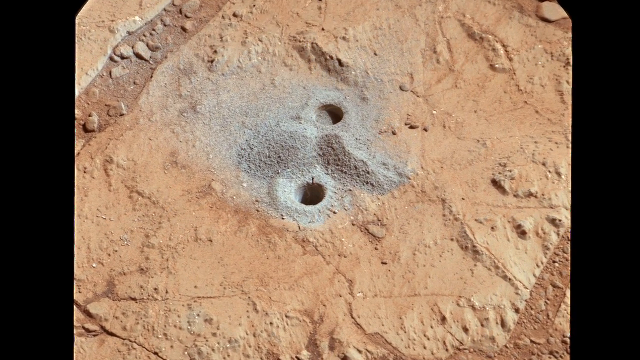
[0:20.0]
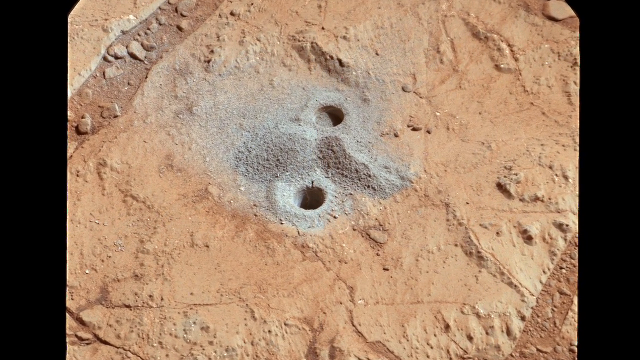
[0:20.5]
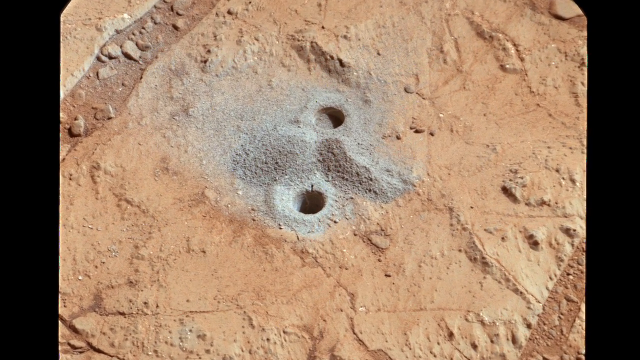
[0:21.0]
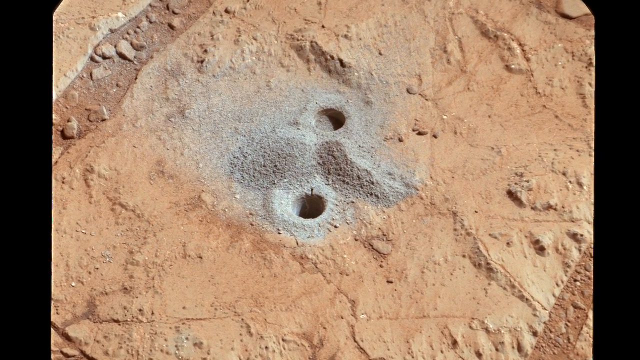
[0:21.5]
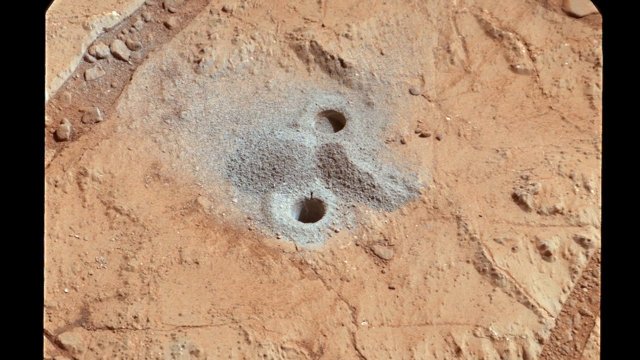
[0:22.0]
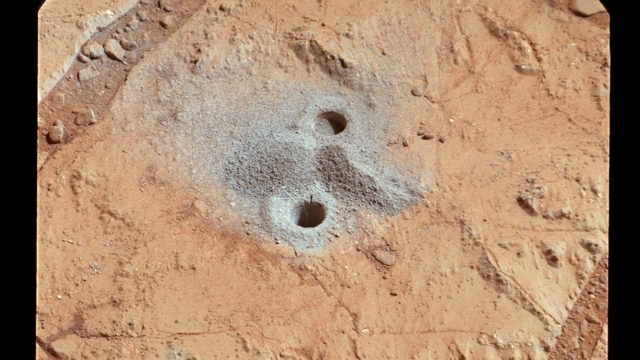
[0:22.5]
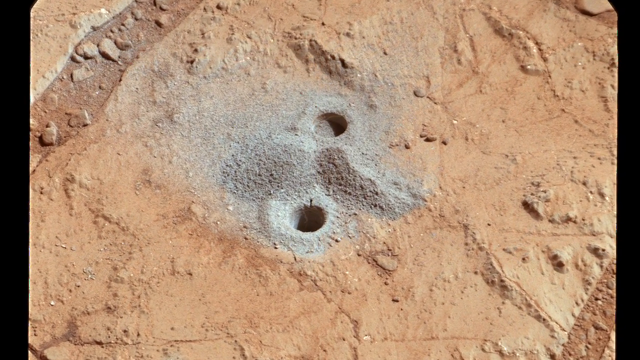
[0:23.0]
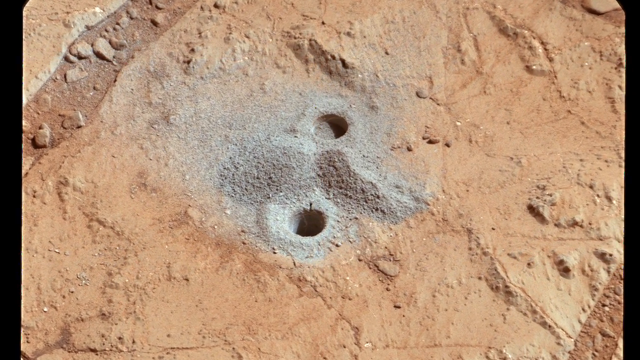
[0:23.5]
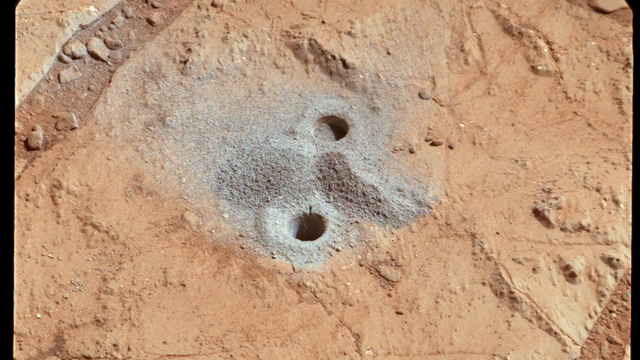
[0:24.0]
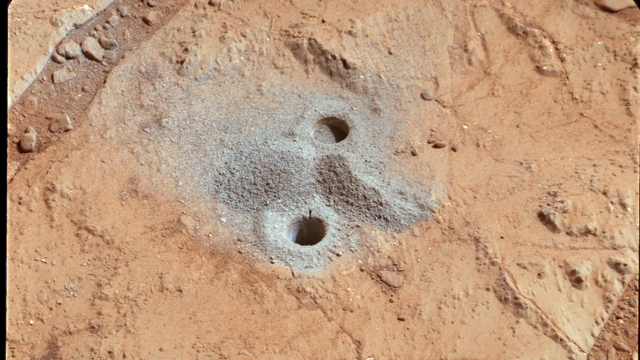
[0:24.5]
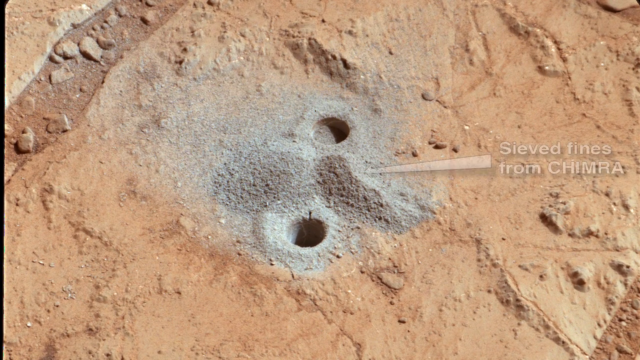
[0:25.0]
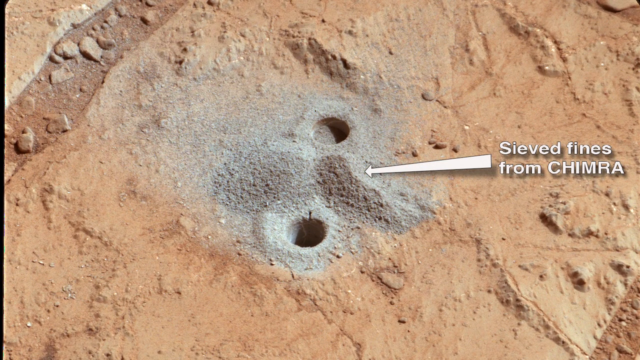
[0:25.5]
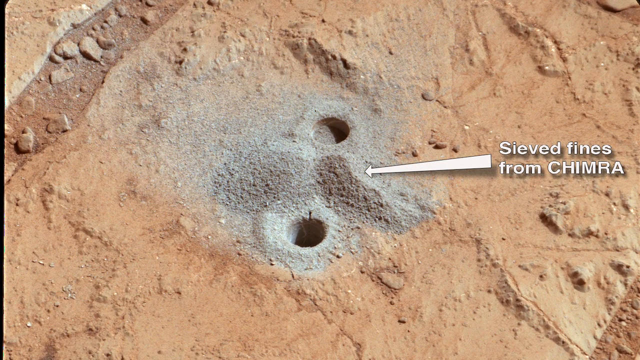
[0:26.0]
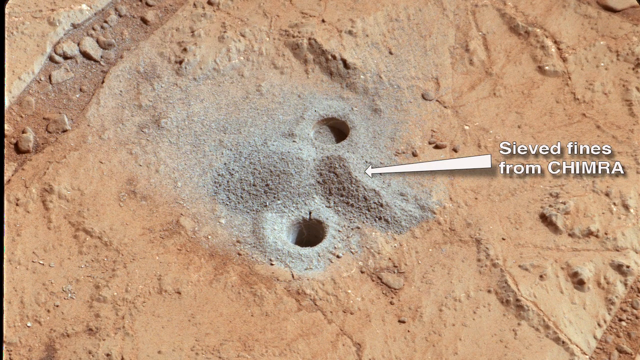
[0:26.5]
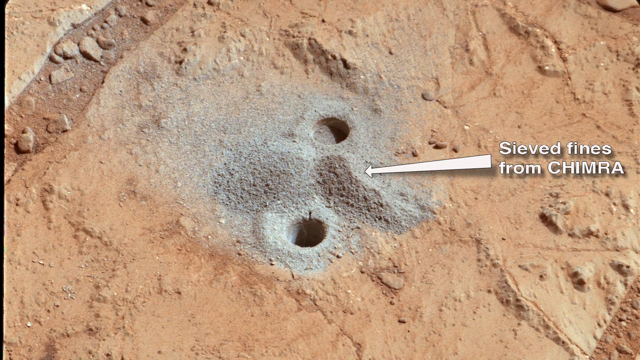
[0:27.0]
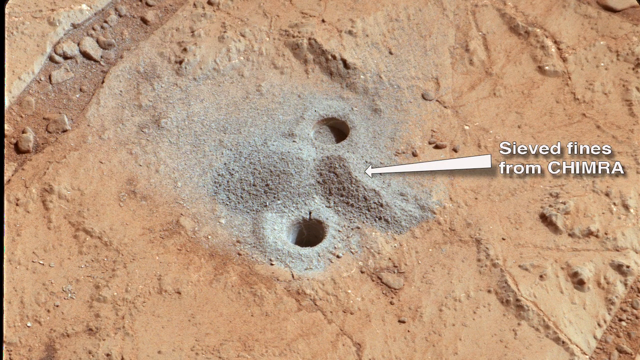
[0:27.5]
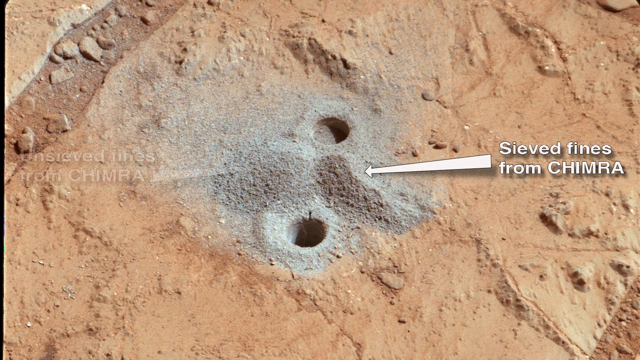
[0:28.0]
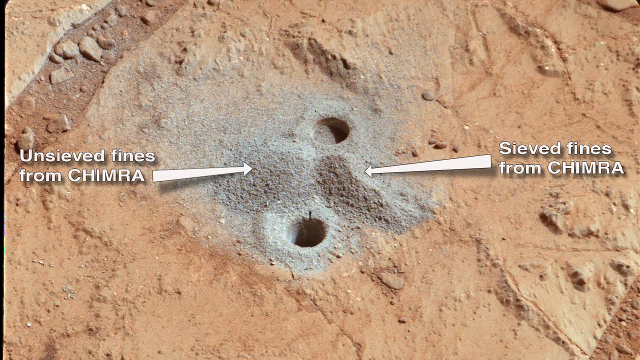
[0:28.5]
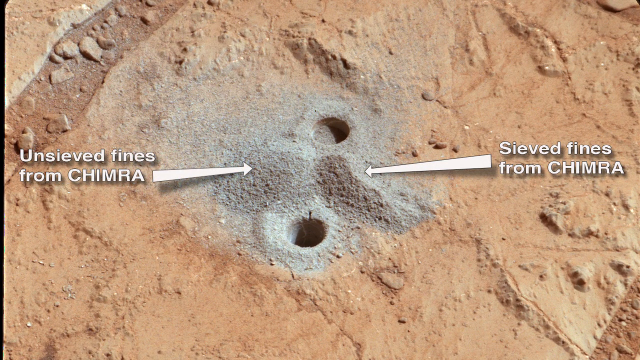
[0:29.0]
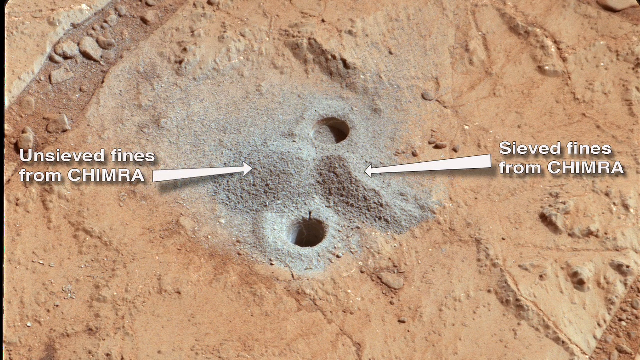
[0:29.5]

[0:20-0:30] What look like holes in the ground on Mars are shown, with the reddish color of the earth on Mars. Grains of what looks like either dust or sand are next to the holes, and the camera zooms in on the two holes. Text appears reading "Sieved finds from CHIMRA", with an arrow pointing from the text to the sand next to the holes. Then more text appears, reading "Unsieved finds from CHIMRA", with an arrow pointing from it to the other pile of dirt or sand on the ground next to the holes. The text is white.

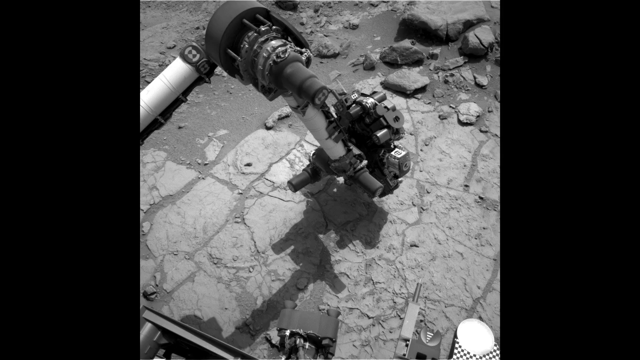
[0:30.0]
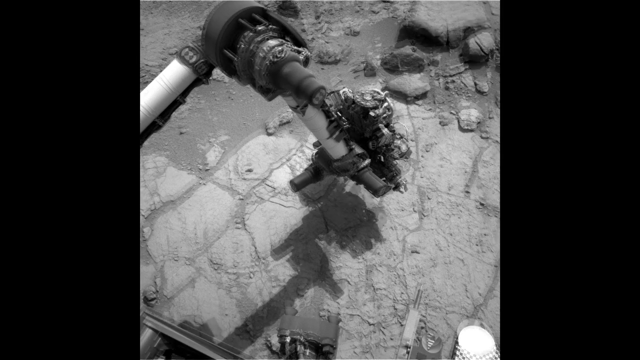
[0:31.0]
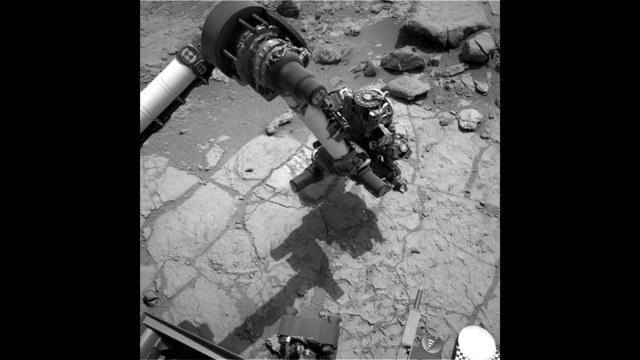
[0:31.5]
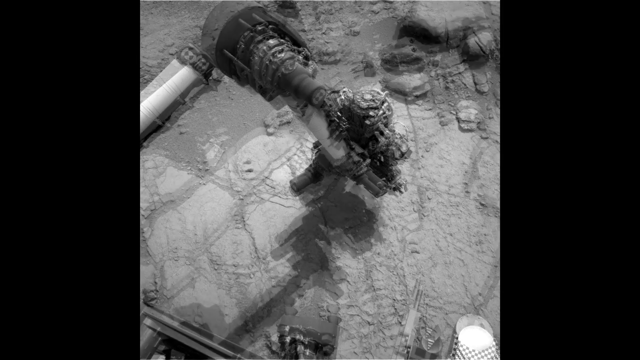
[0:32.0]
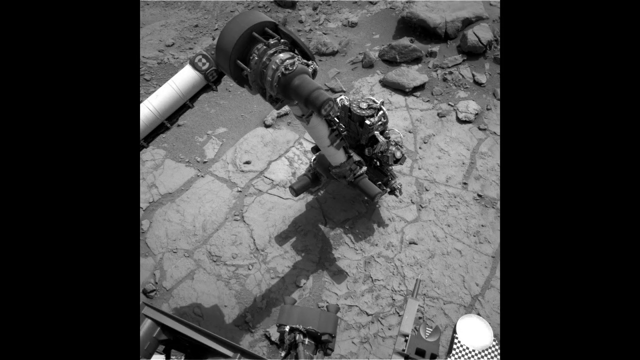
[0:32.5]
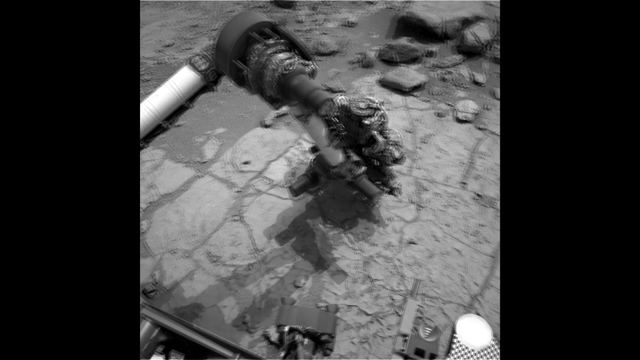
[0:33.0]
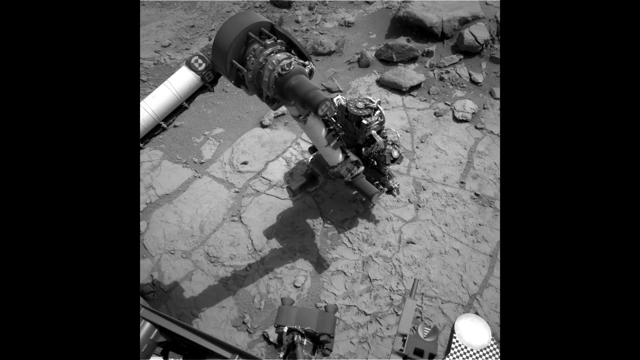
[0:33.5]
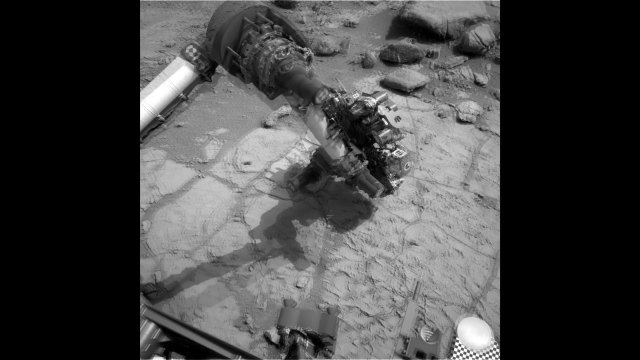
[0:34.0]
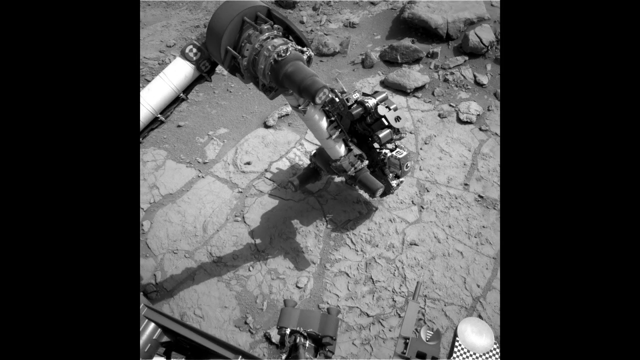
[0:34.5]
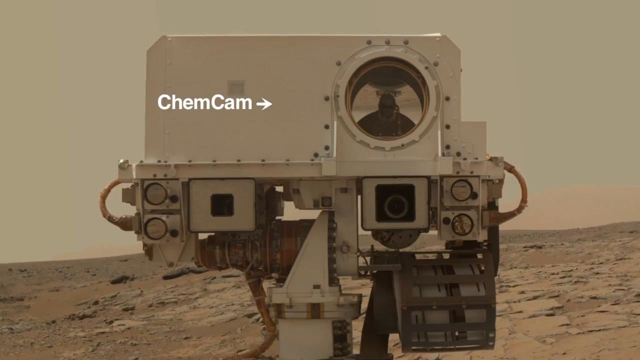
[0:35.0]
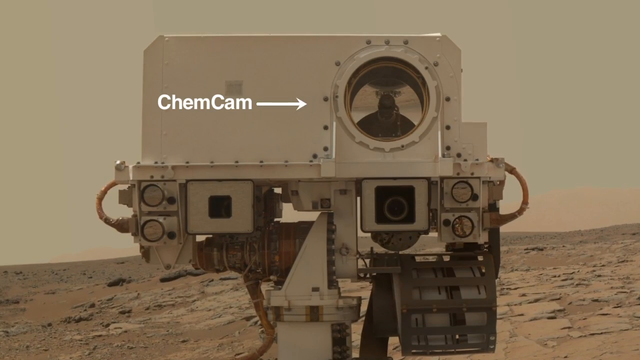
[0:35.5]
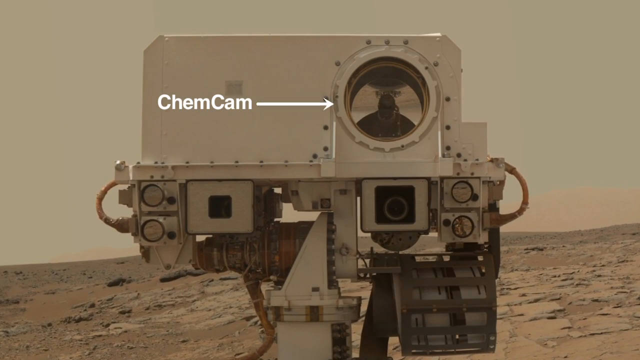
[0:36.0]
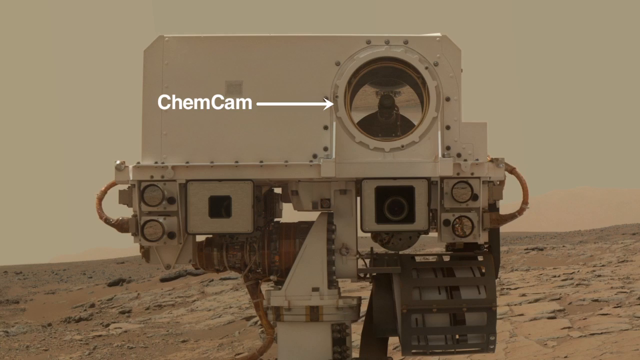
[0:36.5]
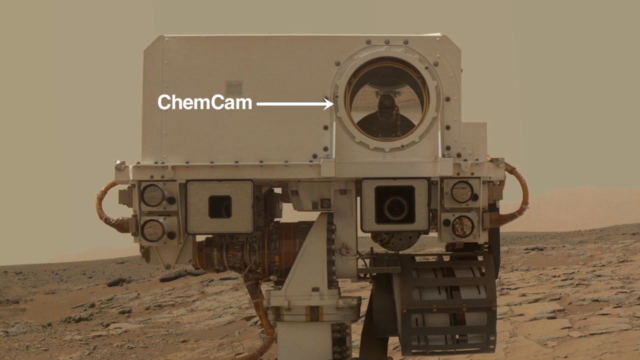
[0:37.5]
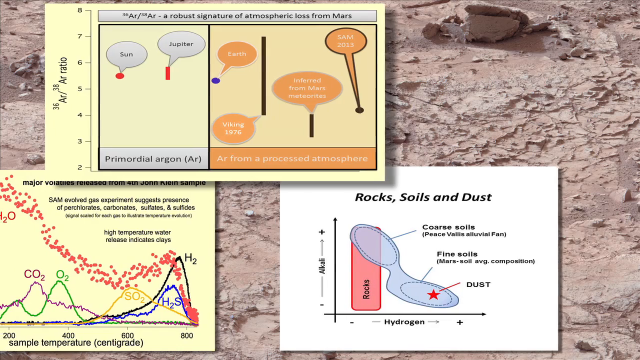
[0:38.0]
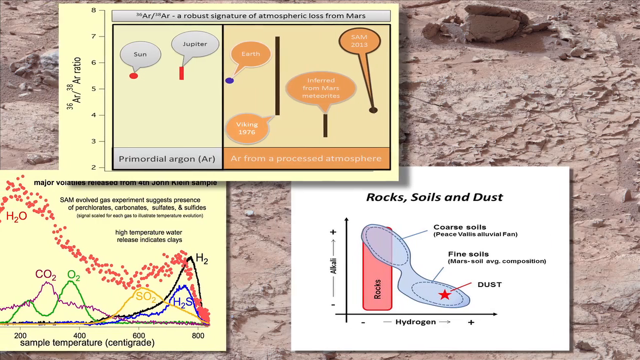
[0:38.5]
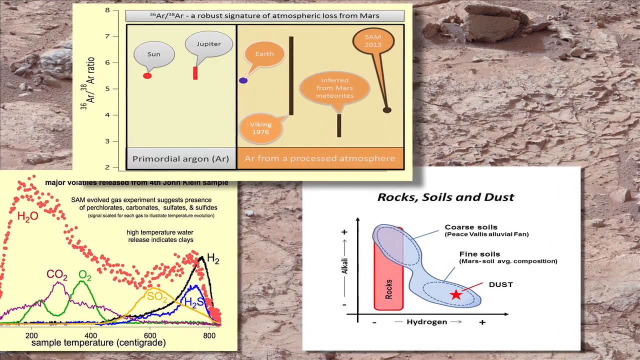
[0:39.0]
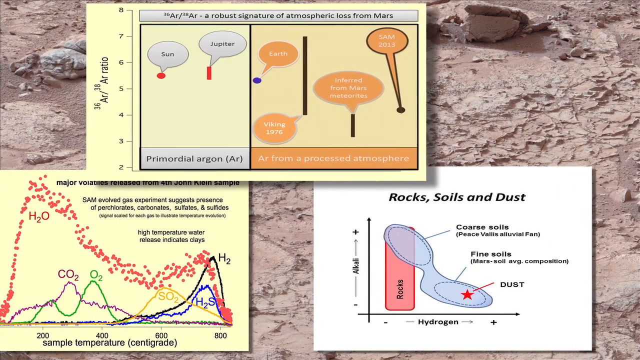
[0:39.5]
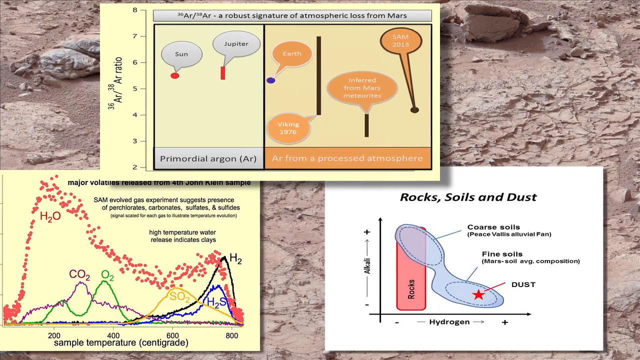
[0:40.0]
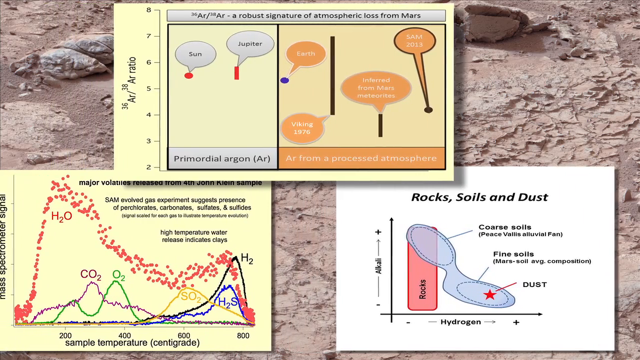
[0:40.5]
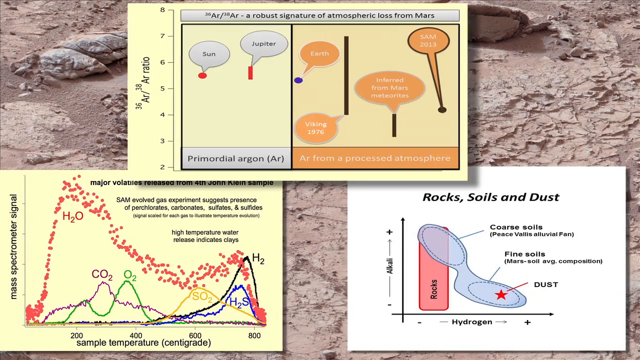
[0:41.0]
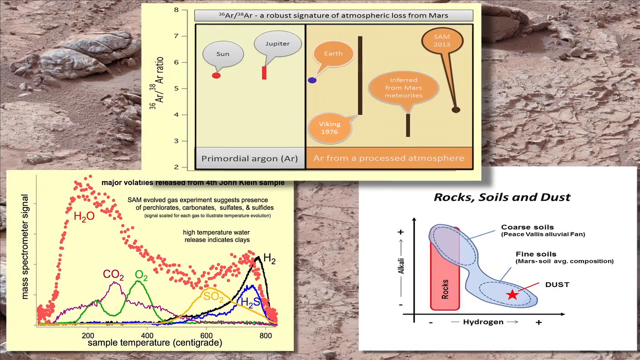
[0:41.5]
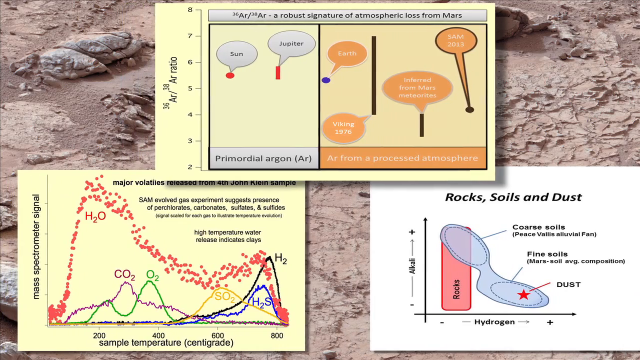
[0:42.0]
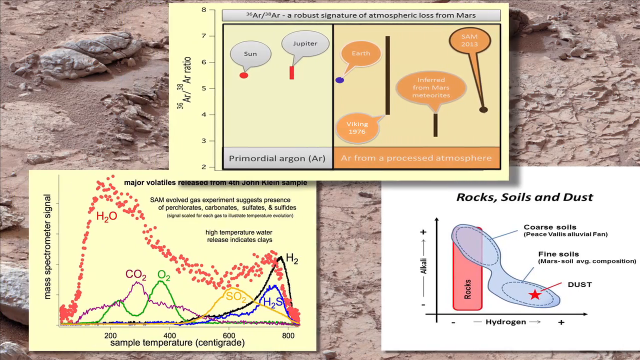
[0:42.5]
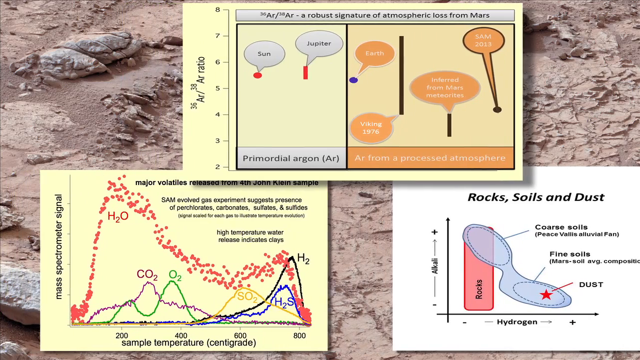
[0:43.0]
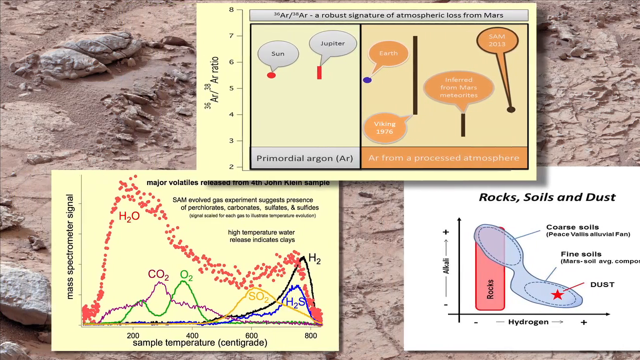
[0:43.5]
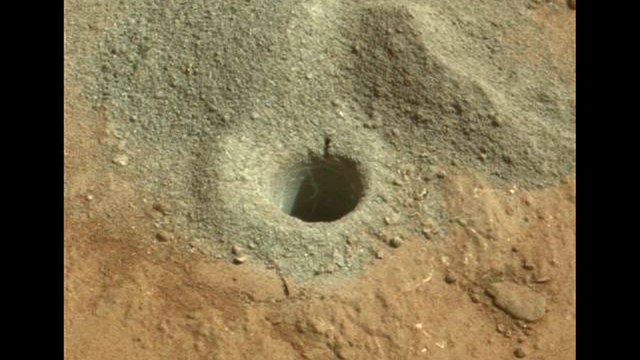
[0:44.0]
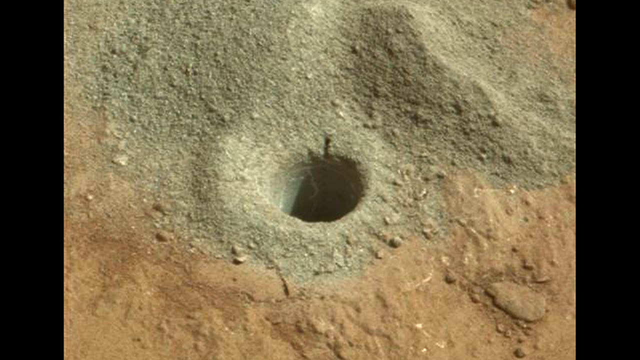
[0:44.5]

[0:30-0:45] A black-and-white still-frame video shows a robot arm moving up and down, apparently making some sort of movement on the surface of Mars. The scene switches to a color image of a contraption that looks like a camera: a big box, what looks like a camera lens, and a whole bunch of equipment underneath it. It appears to be taking a picture, and the landscape of Mars is in the background. Text on the screen reads "ChemCam", with an arrow pointing at the camera lens. The scene then shifts to a series of slides, apparently three, describing the soil on Mars and other aspects of the atmosphere on Mars. Next is a hole in the ground, apparently on Mars, with dirt from the hole around it and a reddish color around the hole.